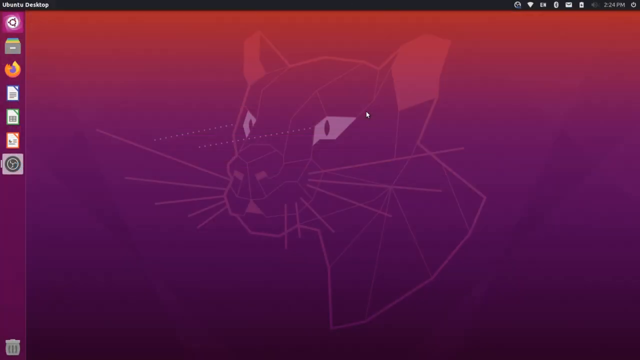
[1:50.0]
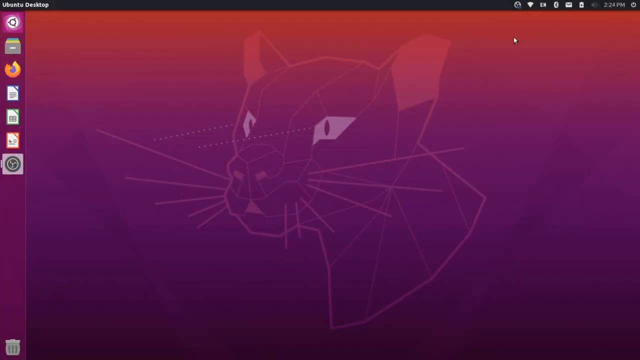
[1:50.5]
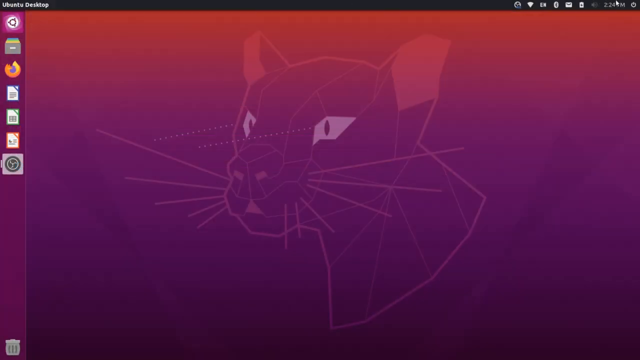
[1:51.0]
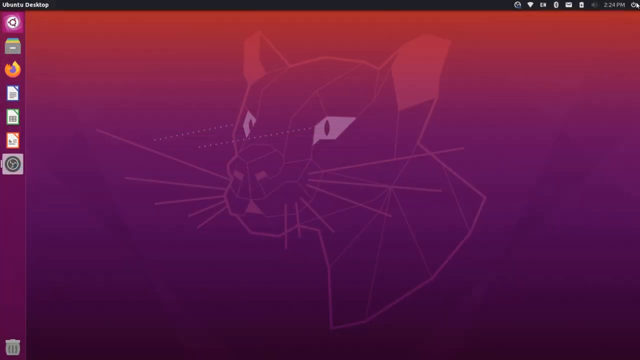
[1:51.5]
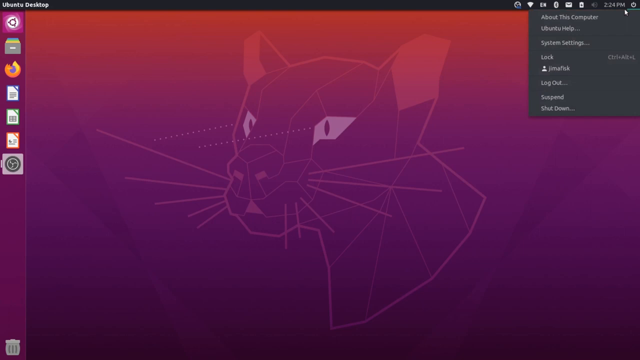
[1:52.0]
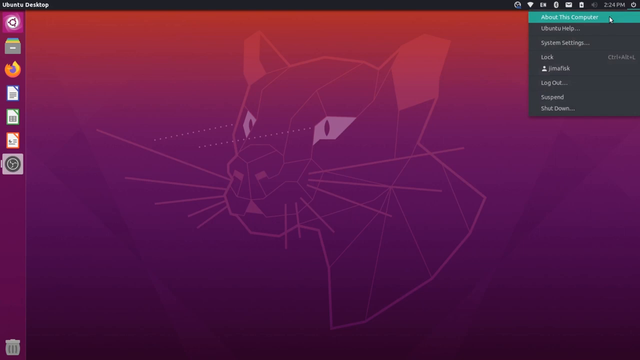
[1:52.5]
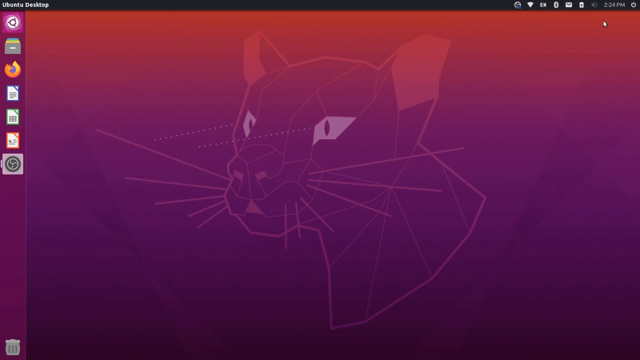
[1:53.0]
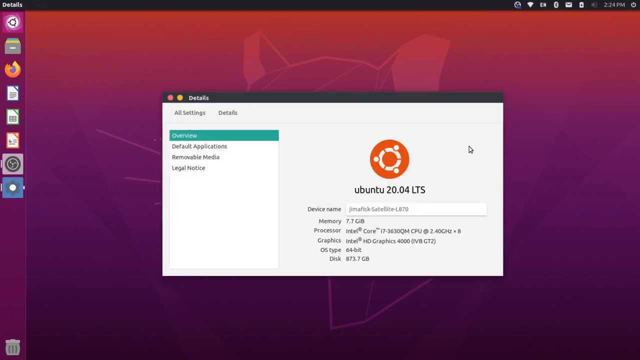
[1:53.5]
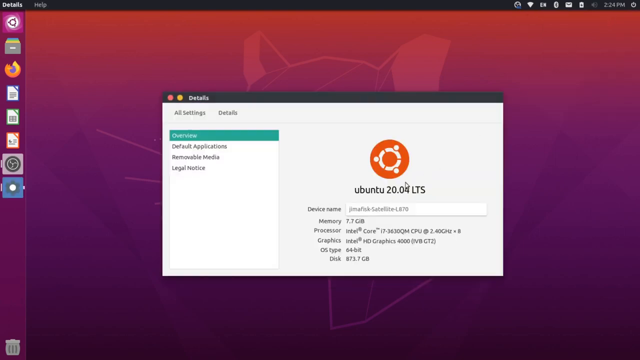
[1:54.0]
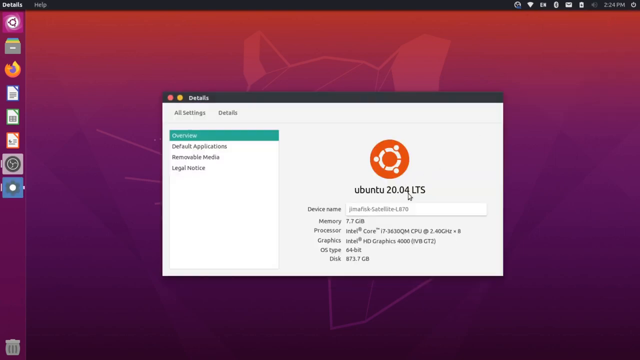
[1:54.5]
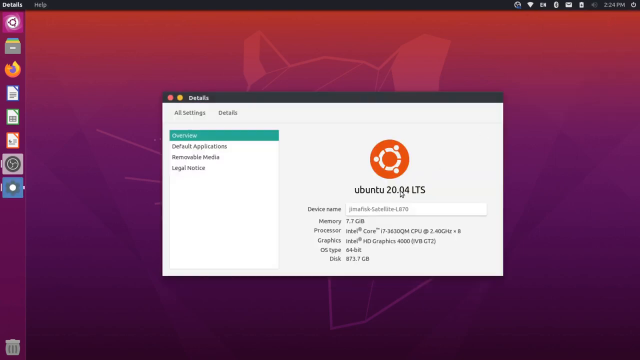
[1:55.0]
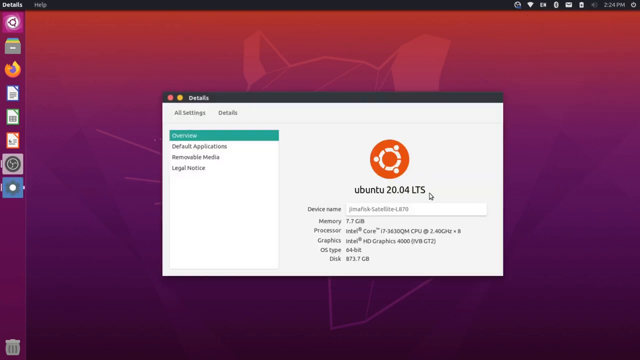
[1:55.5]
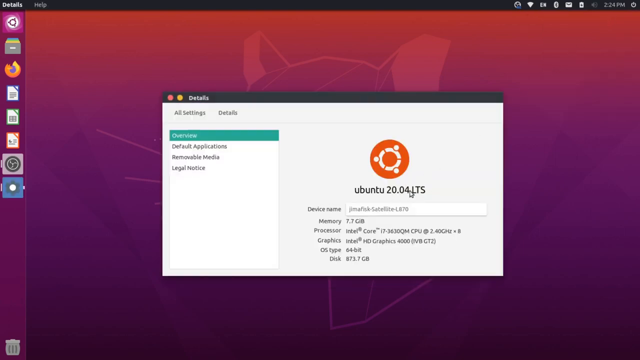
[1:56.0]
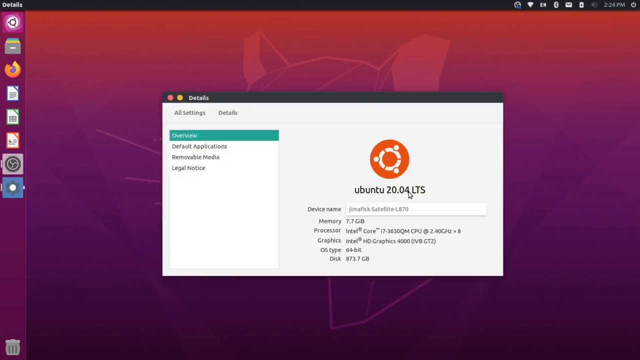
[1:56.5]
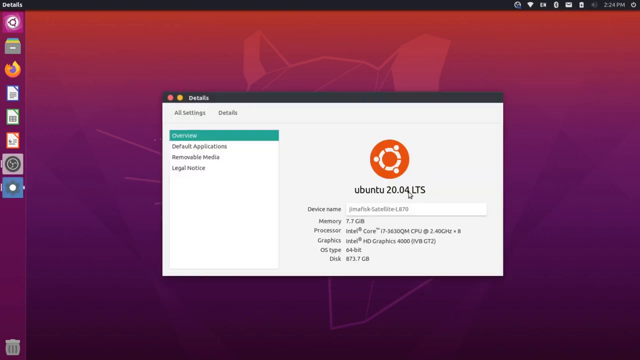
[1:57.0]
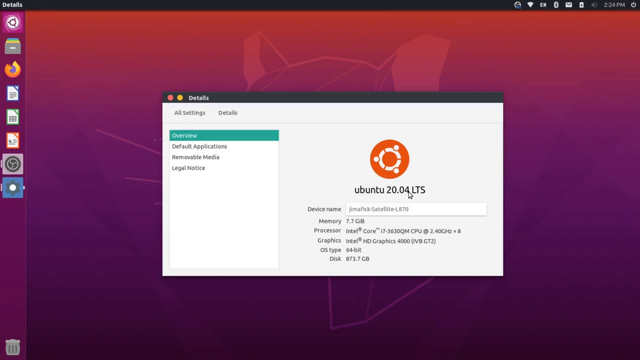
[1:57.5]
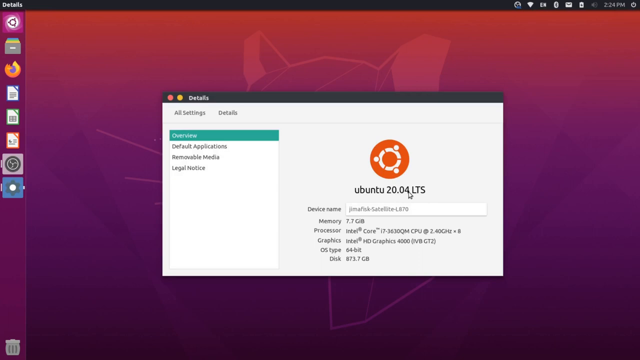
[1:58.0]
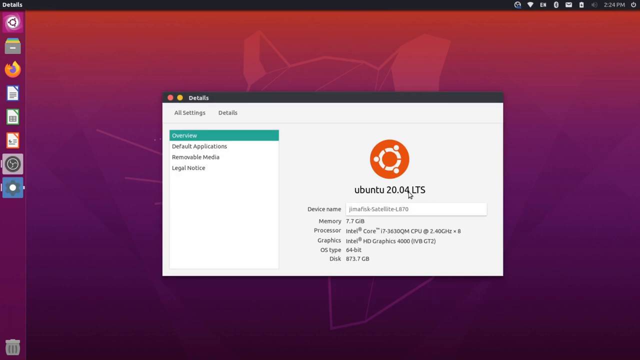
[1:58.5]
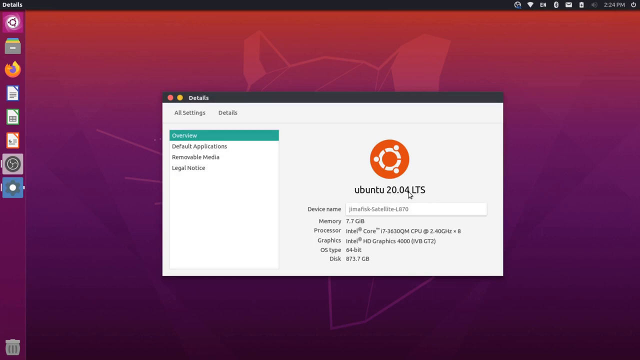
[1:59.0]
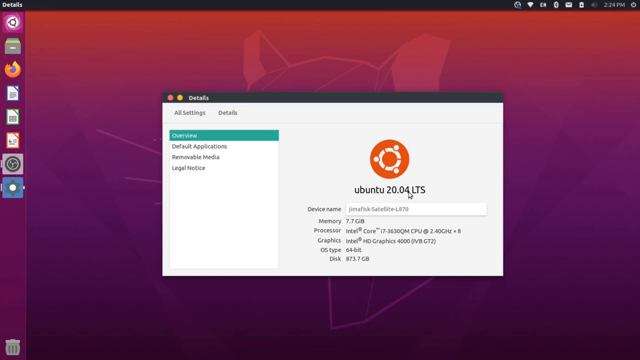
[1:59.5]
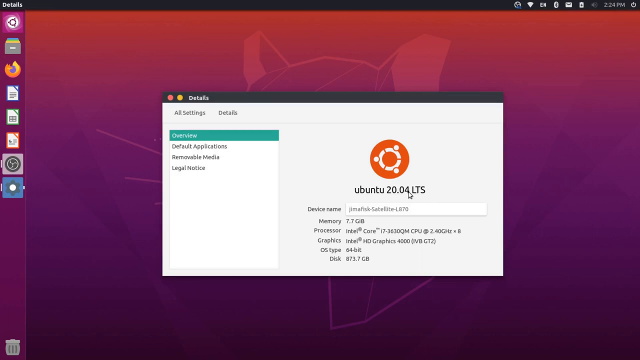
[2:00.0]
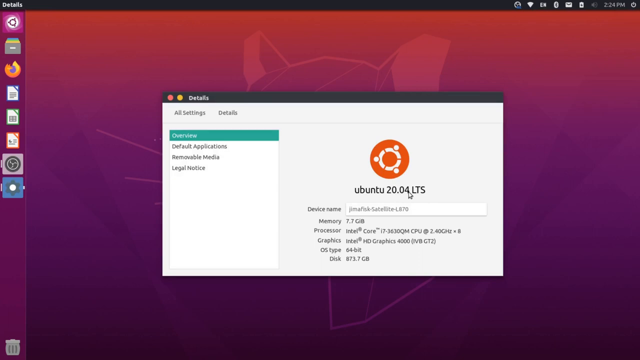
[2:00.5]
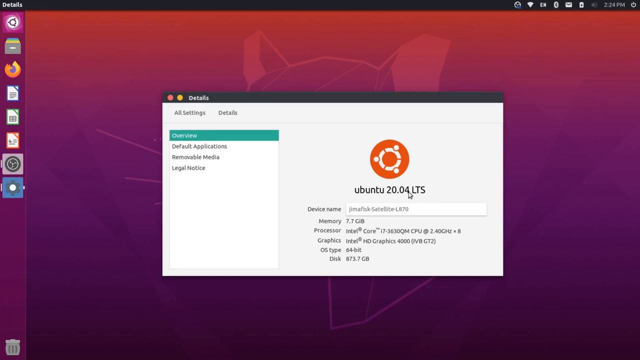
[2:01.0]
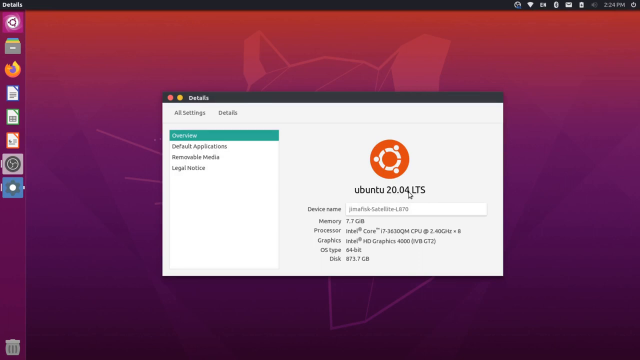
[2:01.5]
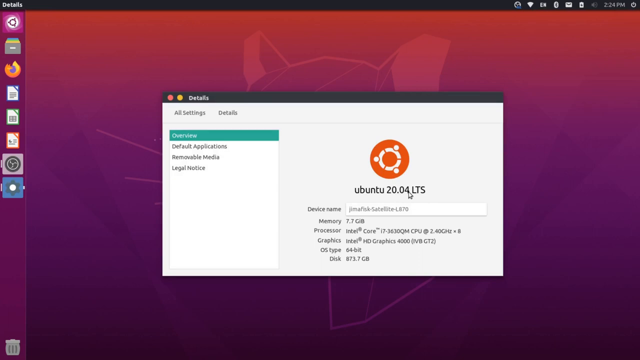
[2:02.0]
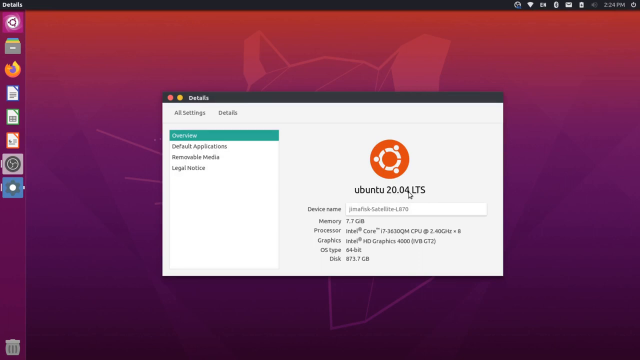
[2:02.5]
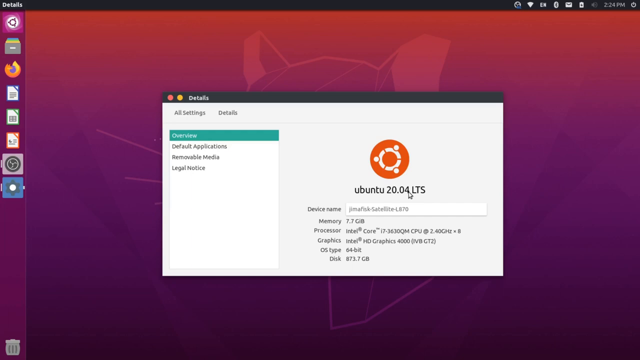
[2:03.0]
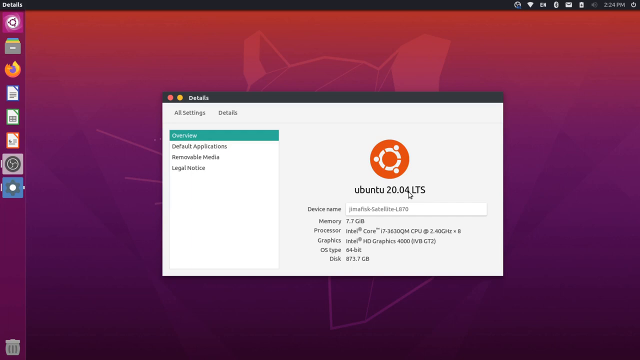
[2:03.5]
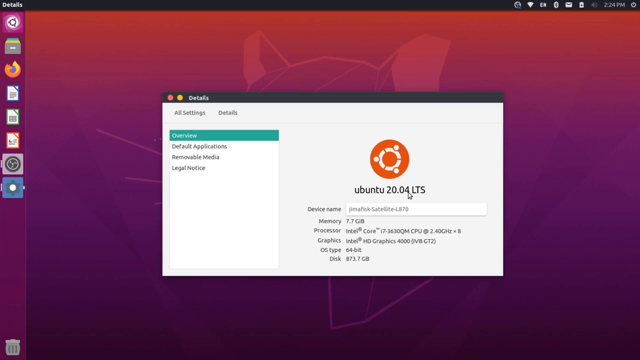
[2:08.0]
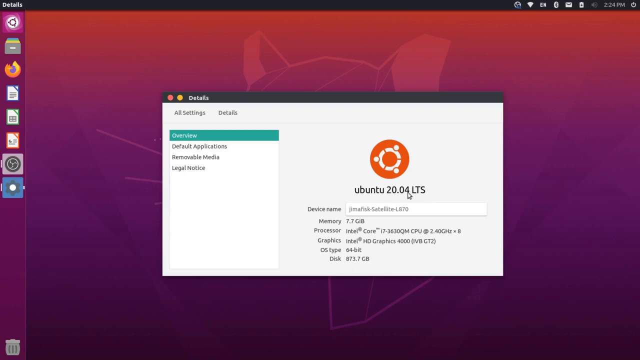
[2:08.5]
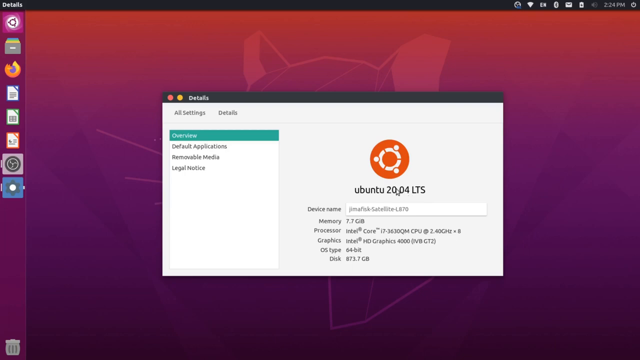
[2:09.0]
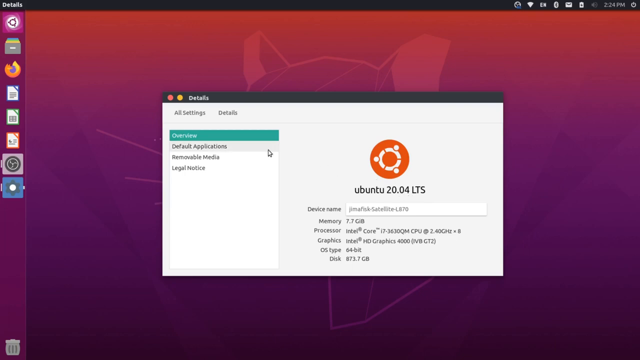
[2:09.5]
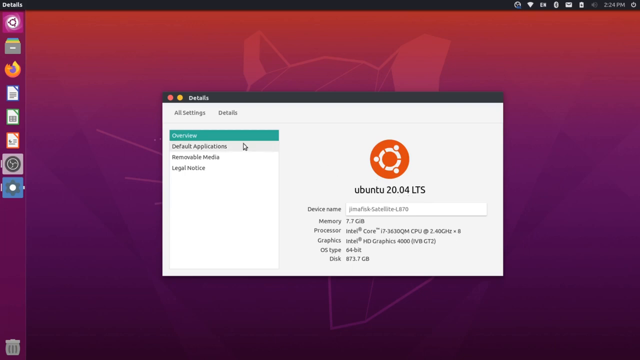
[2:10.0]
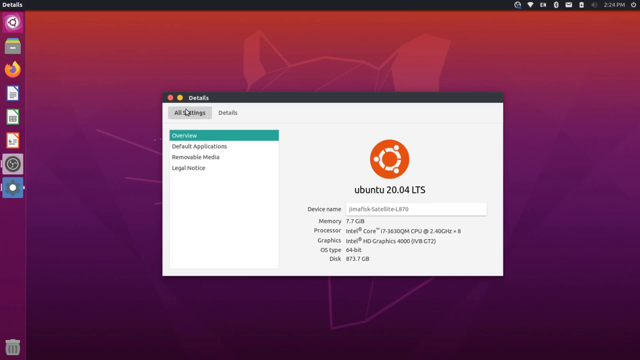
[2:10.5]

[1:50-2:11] What appears to be a screensaver on an Ubuntu desktop is shown. On the left are shortcuts: one for a folder, one for Mozilla Firefox, and three apparently for pages, with a trash can at the bottom. The main image is a big cat created mostly with straight lines but realistic-looking. The screen is purplish across the bottom, about three-quarters of it, and like a rust or amber color at the top, the two blending together. The cursor moves to an icon at the top and clicks it, and a black box drops down. The cursor moves over about this computer, which opens a box for Ubuntu 20.04 LTS with four tabs on the left and two up top, one for all settings and one for details; the overview tab is open.